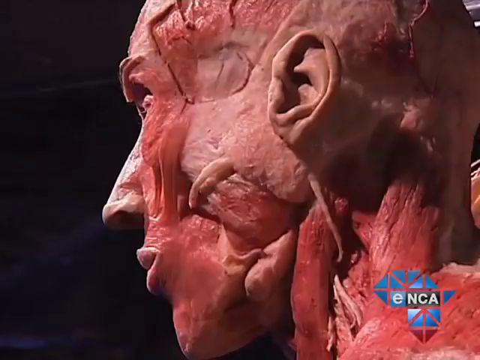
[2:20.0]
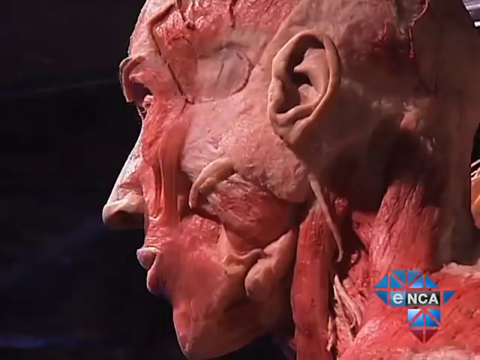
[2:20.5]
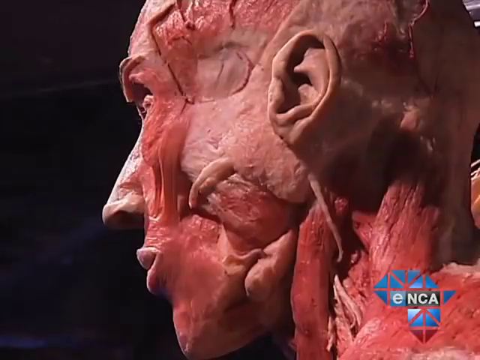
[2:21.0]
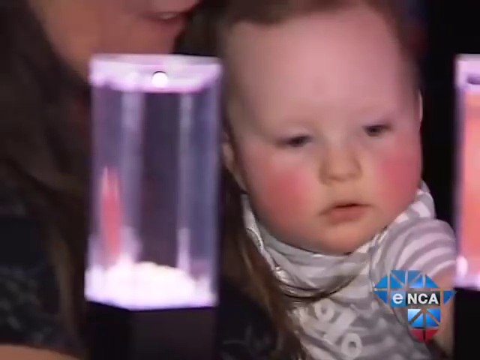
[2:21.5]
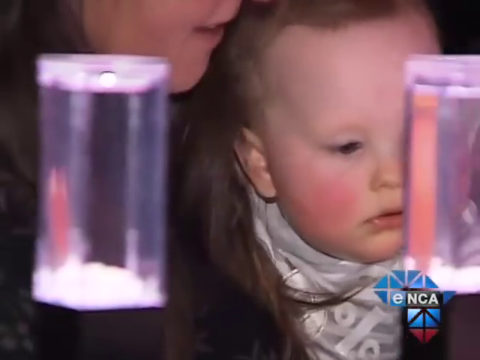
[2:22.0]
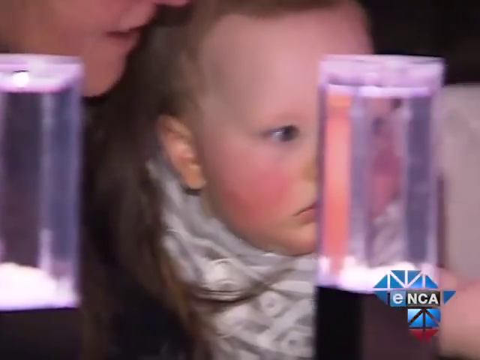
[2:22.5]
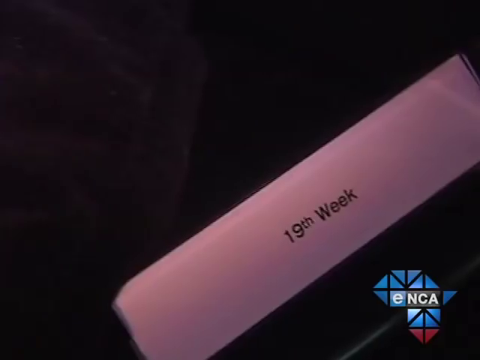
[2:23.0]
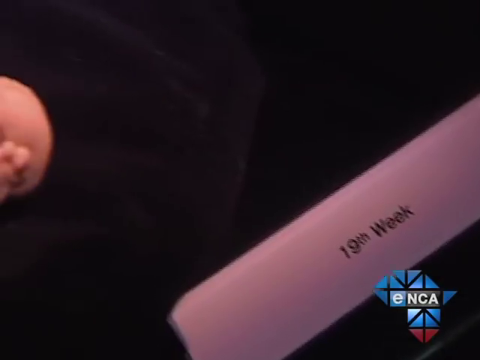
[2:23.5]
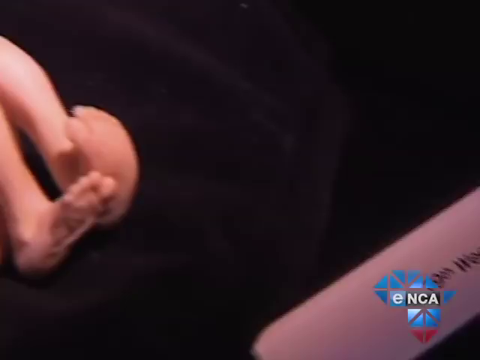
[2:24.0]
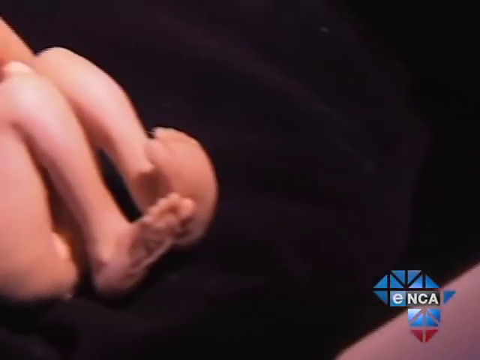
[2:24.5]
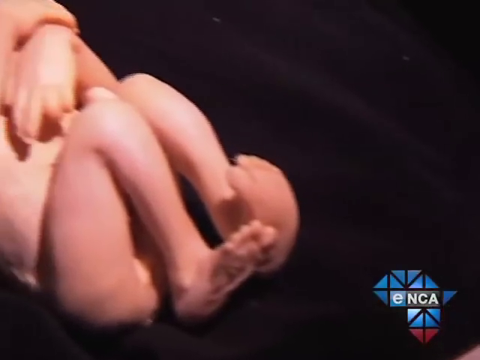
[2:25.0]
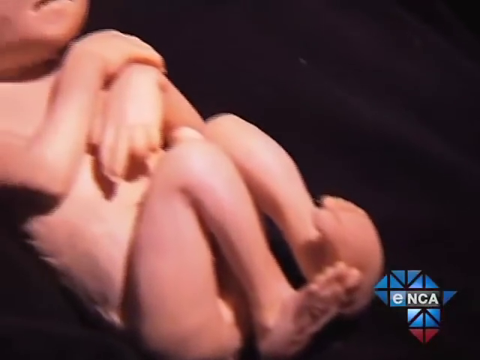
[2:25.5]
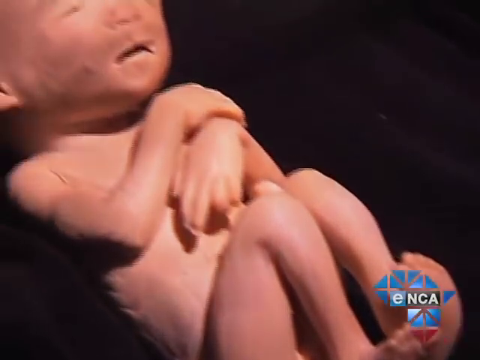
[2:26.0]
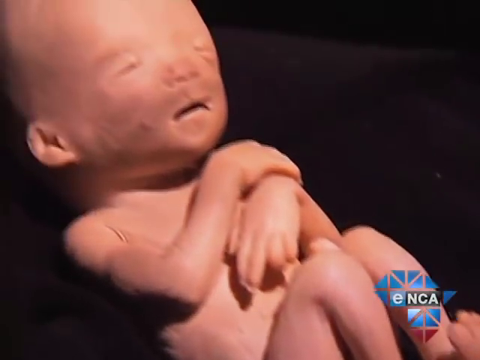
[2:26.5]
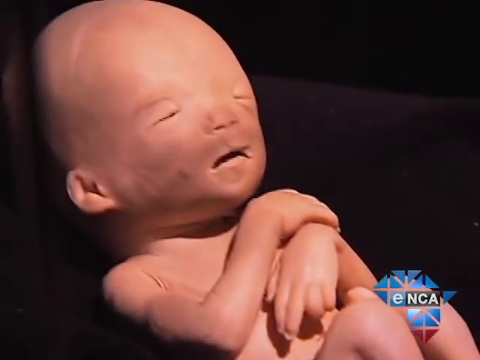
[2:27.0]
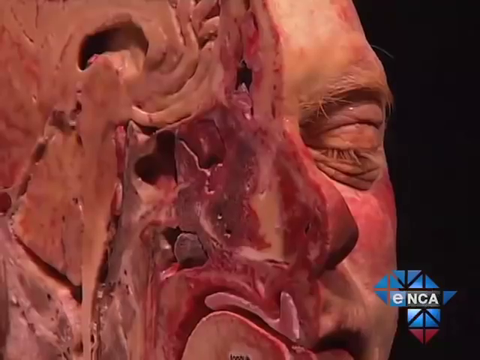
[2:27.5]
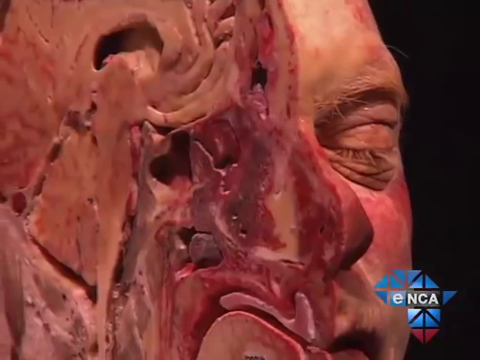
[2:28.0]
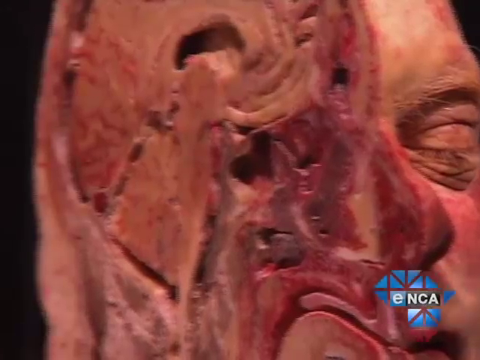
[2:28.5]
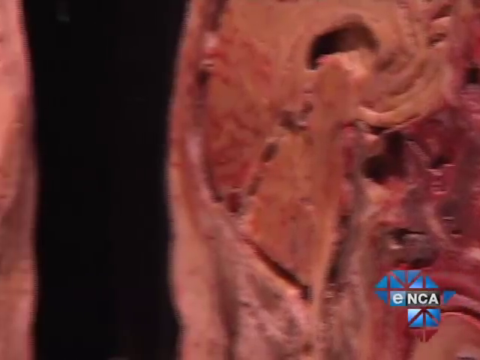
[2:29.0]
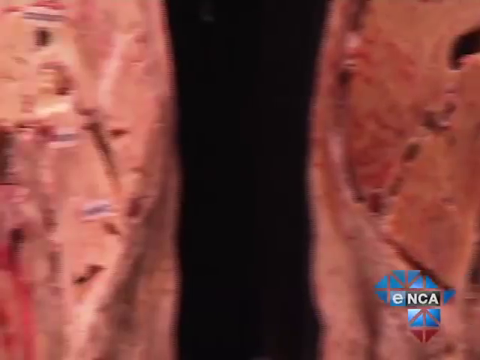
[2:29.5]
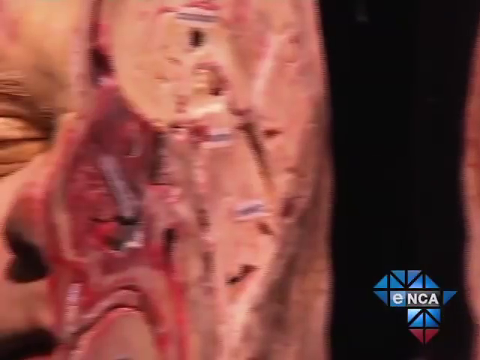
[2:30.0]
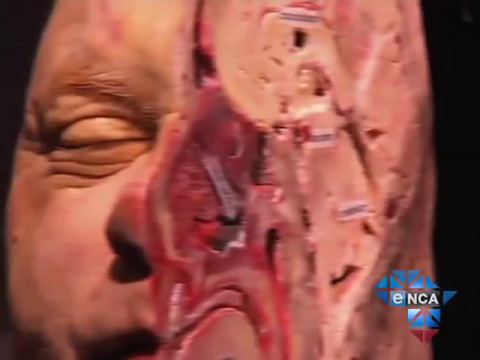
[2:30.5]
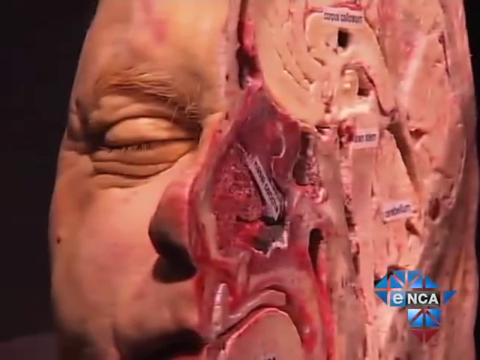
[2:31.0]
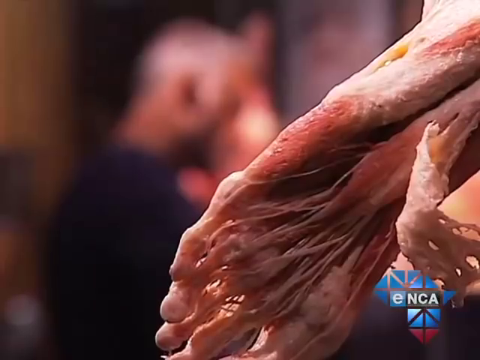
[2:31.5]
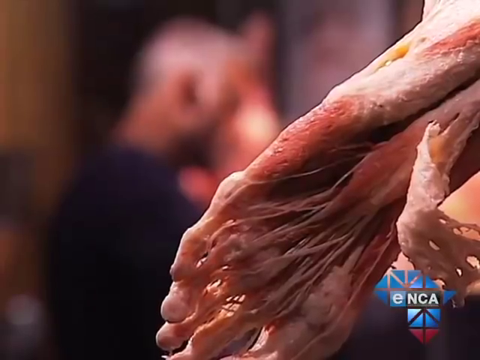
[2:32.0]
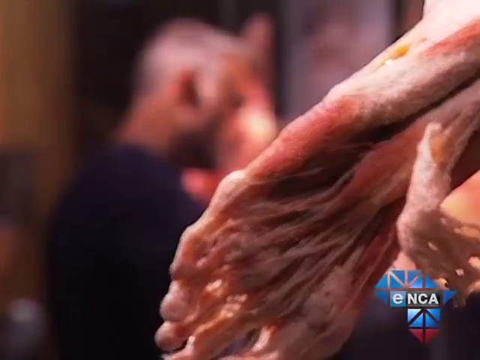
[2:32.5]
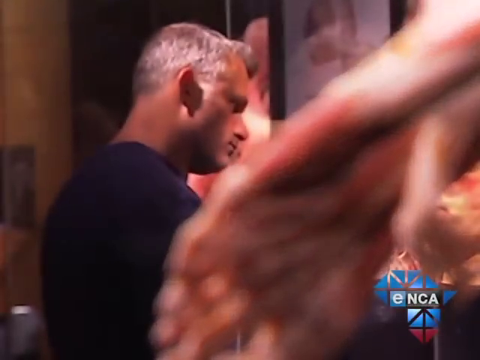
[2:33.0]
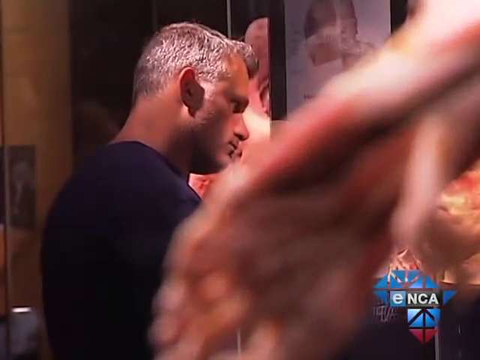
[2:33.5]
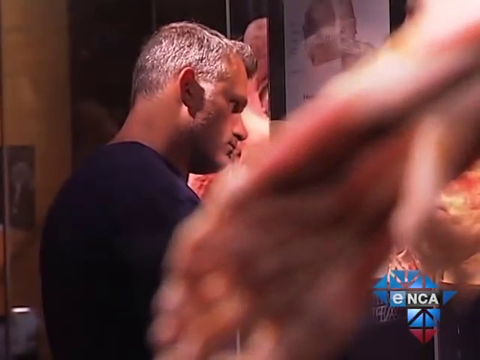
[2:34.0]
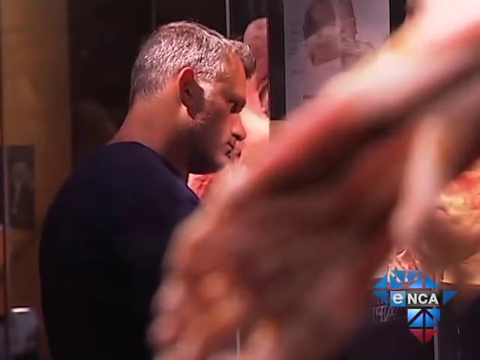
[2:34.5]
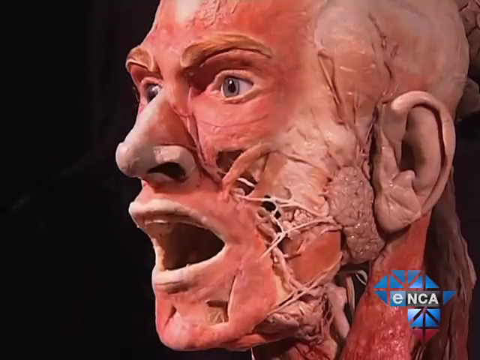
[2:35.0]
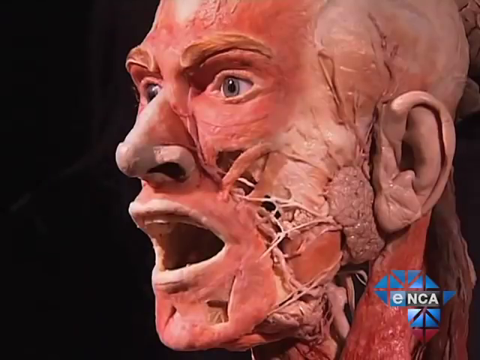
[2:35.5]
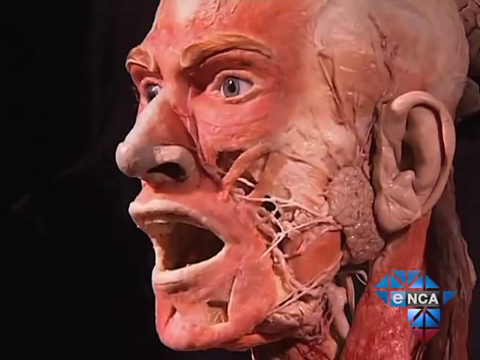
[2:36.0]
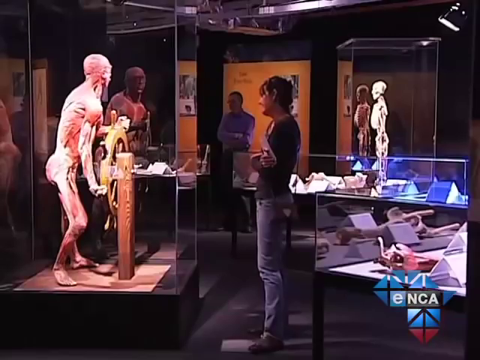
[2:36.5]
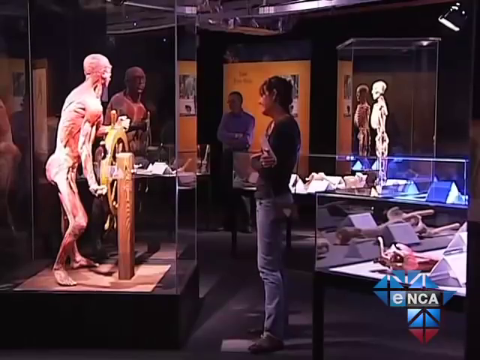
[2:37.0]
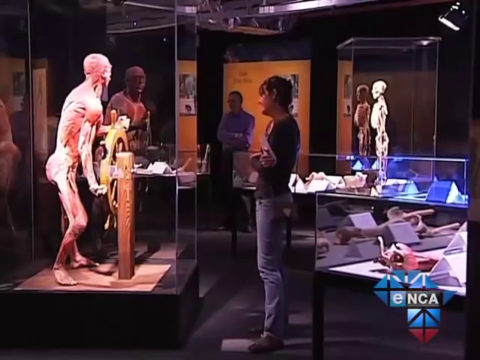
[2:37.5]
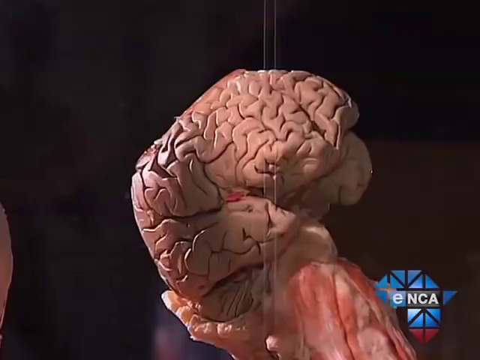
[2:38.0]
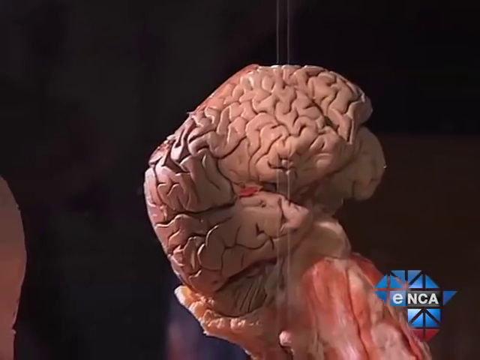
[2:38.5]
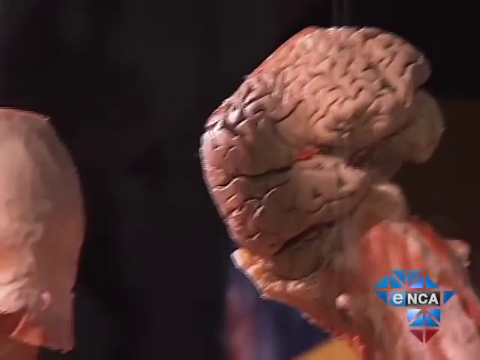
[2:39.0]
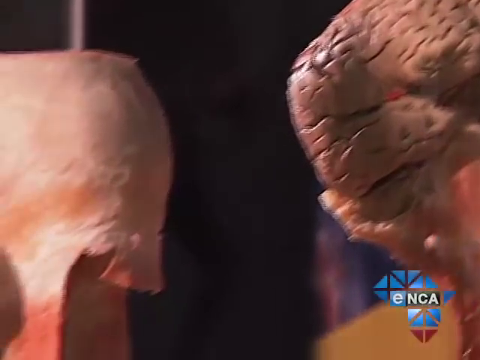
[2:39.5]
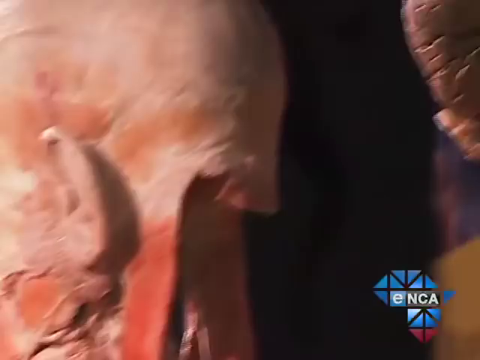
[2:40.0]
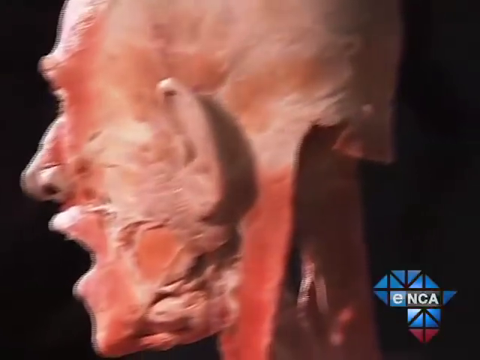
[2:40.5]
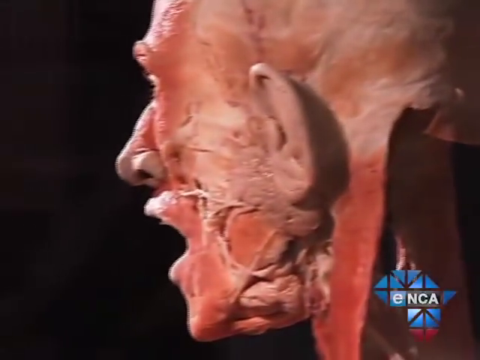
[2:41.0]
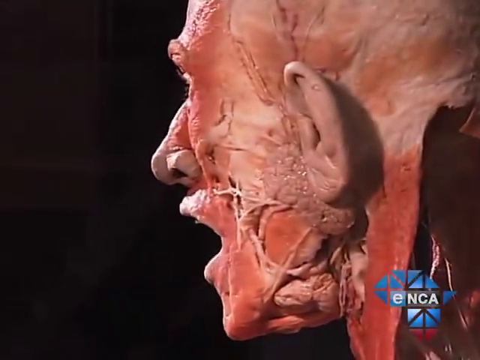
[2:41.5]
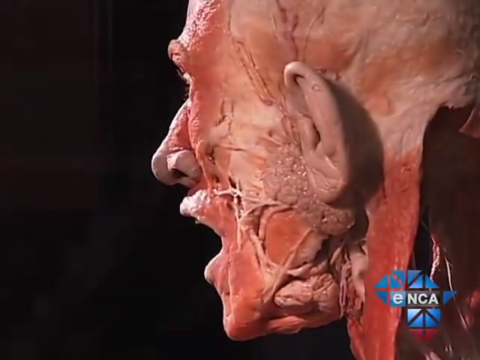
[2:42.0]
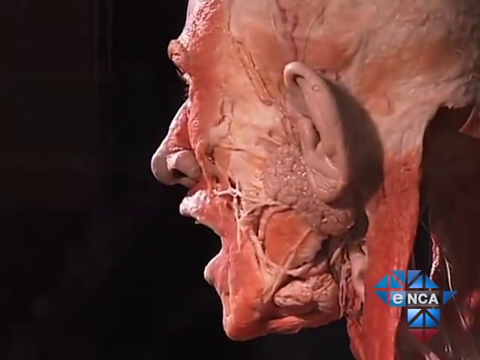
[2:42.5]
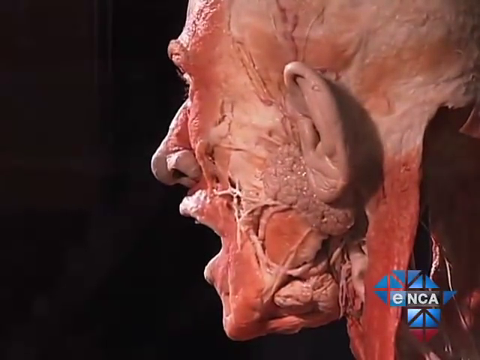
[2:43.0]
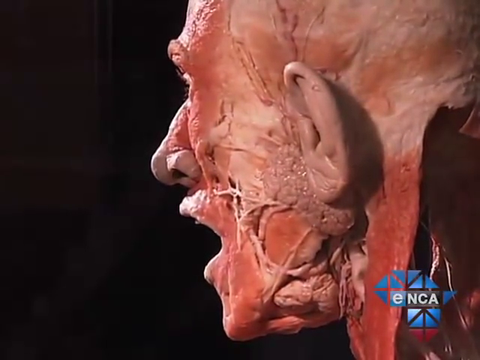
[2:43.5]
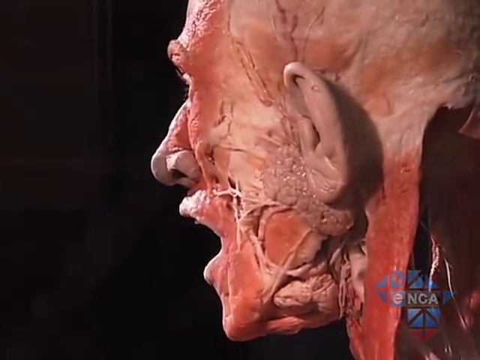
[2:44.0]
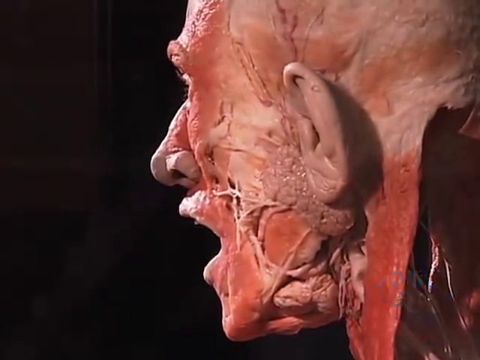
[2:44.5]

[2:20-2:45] A science exploration area has embalmed bodies donated to science on display. The ENCA logo is in the lower right-hand corner of the screen. The video focuses on the human body, including what a baby looks like at 19 weeks, as well as a person's foot and cheek. With the skin removed, the ligaments, tendons, bones and muscle are visible.